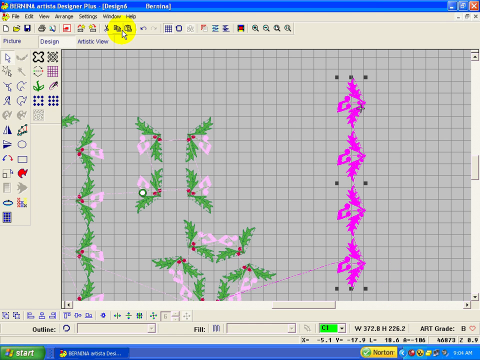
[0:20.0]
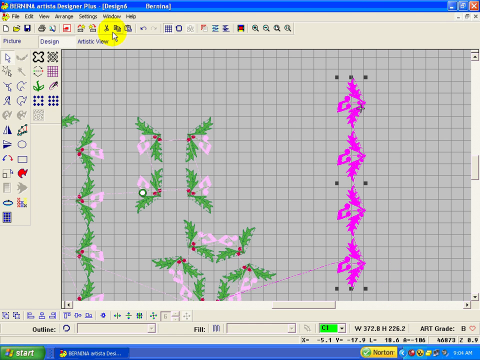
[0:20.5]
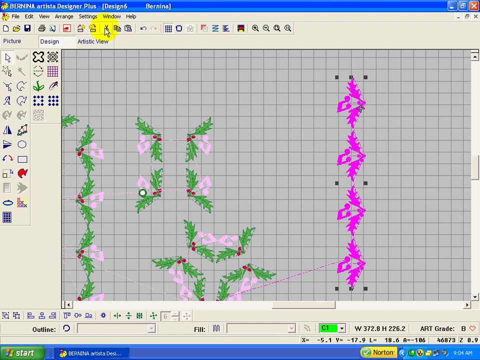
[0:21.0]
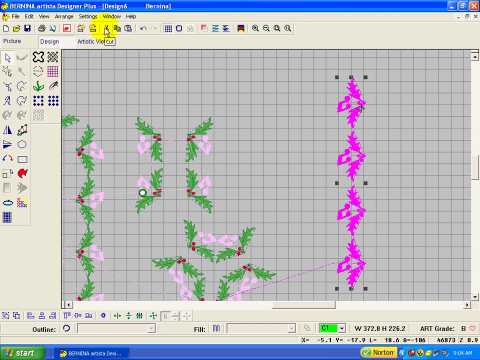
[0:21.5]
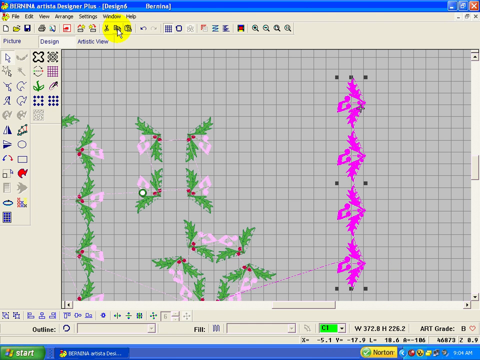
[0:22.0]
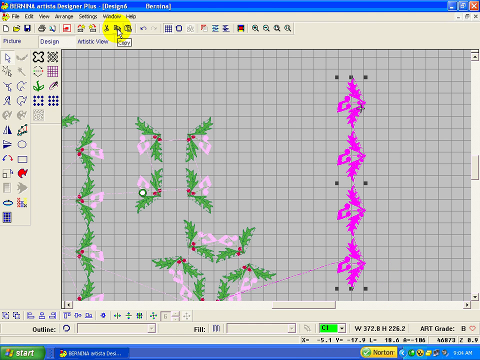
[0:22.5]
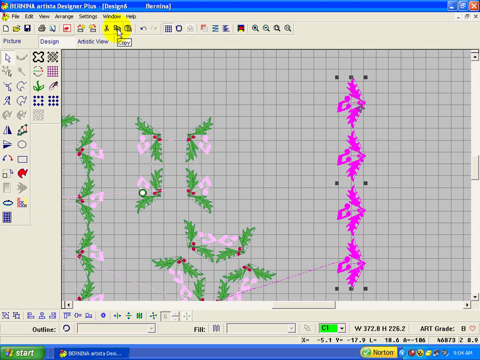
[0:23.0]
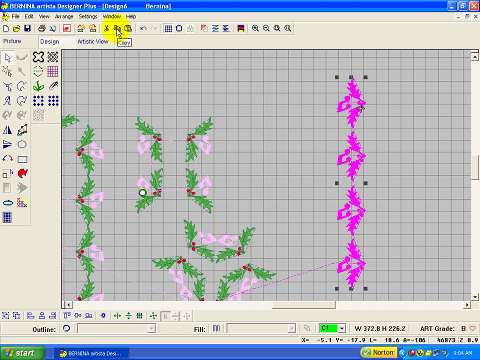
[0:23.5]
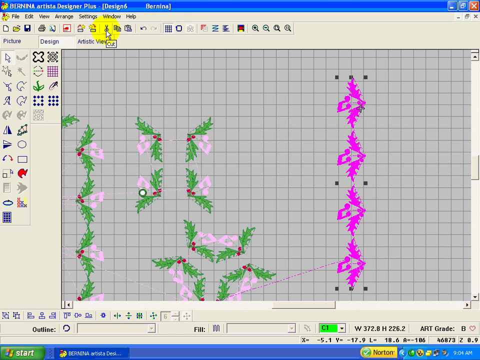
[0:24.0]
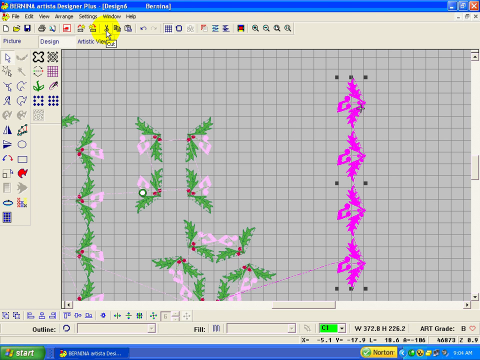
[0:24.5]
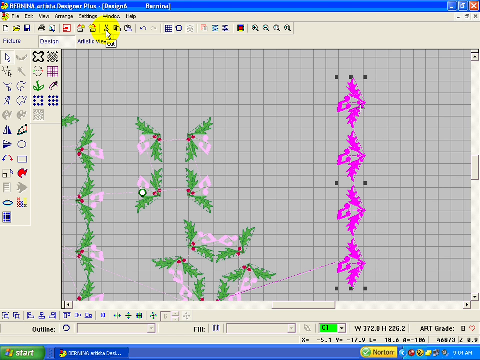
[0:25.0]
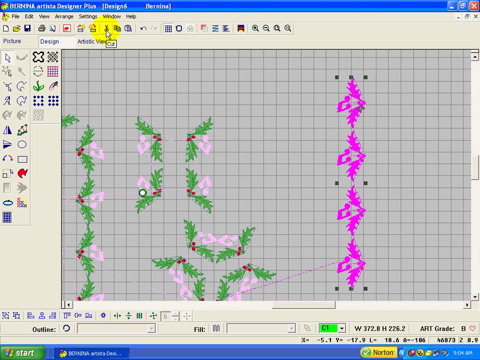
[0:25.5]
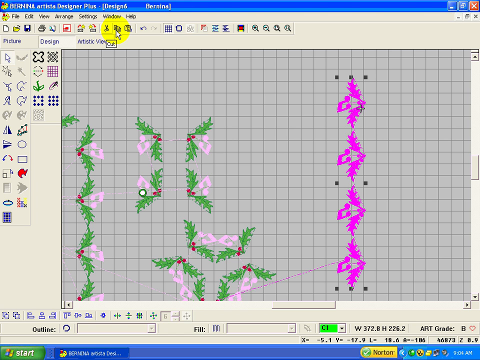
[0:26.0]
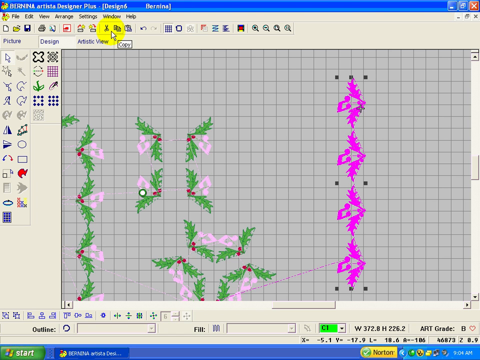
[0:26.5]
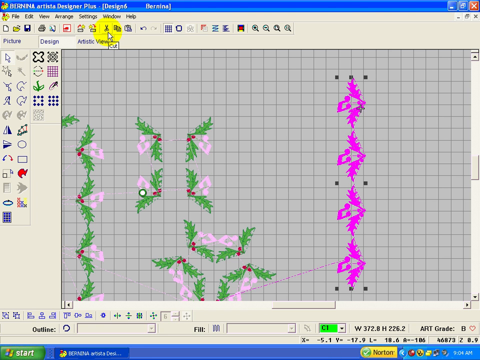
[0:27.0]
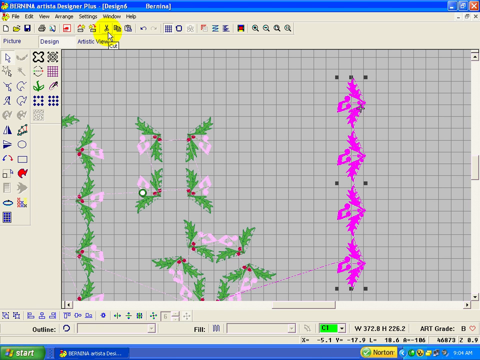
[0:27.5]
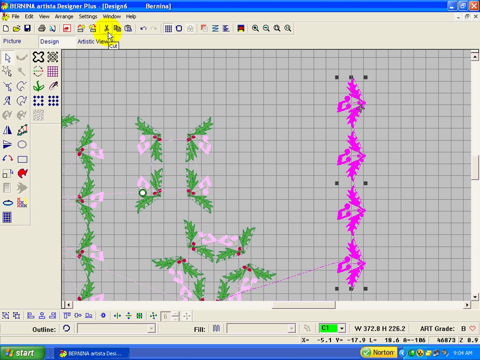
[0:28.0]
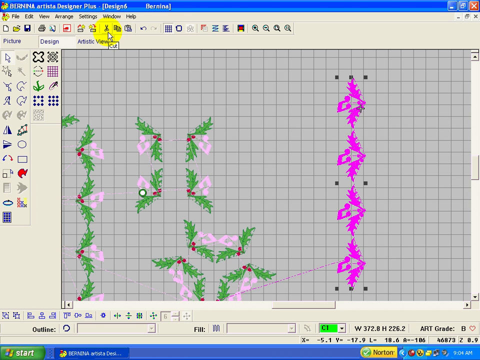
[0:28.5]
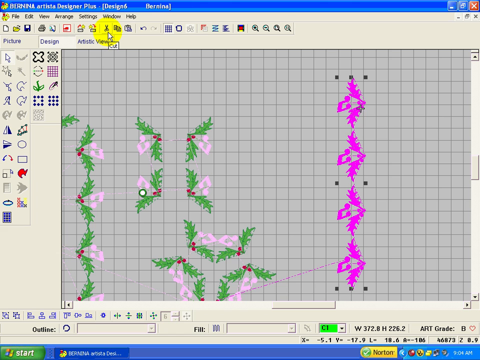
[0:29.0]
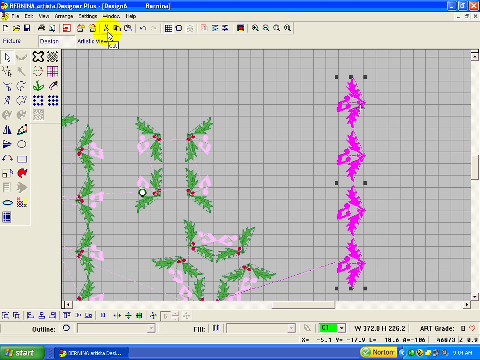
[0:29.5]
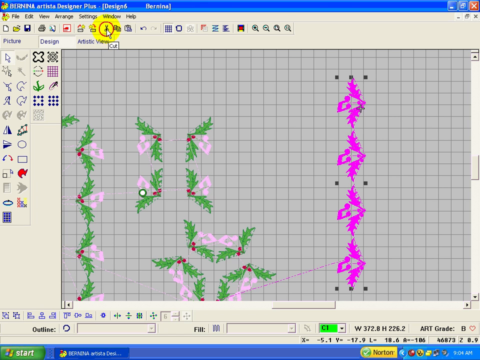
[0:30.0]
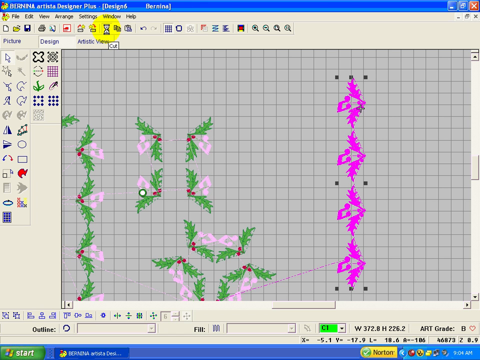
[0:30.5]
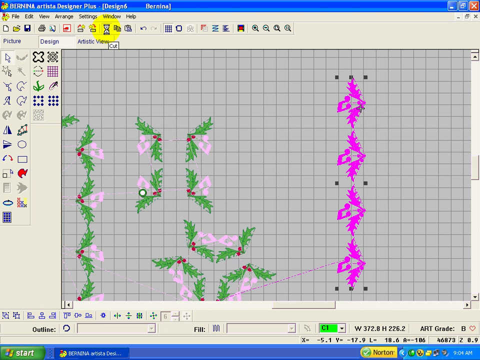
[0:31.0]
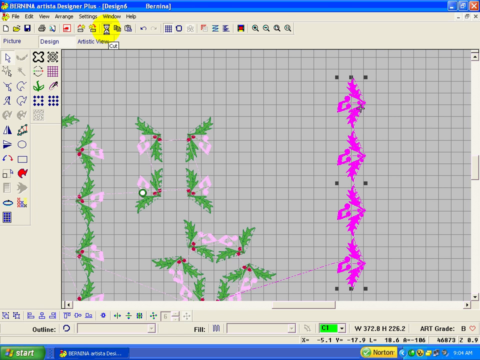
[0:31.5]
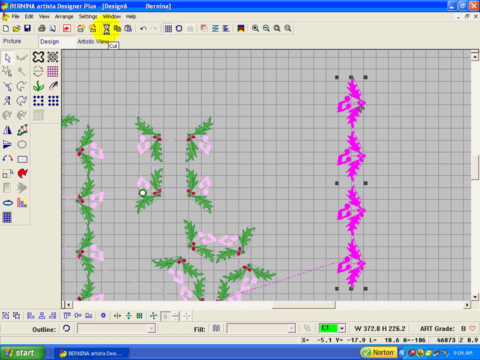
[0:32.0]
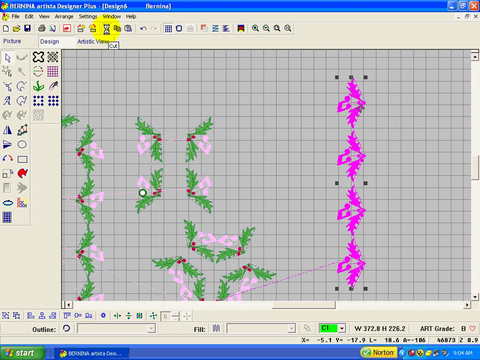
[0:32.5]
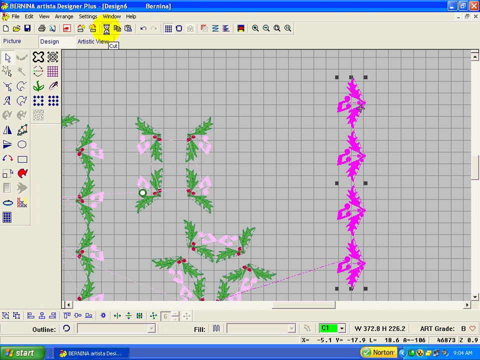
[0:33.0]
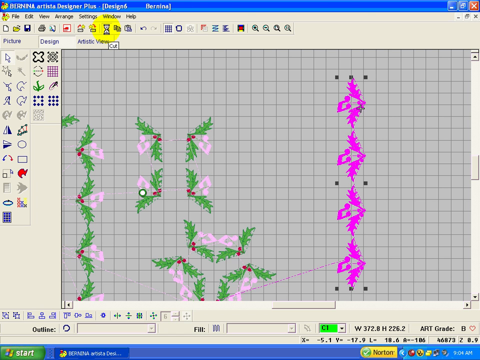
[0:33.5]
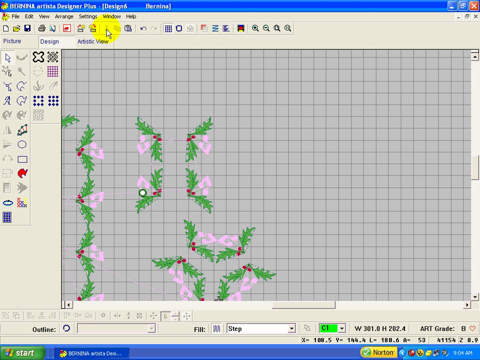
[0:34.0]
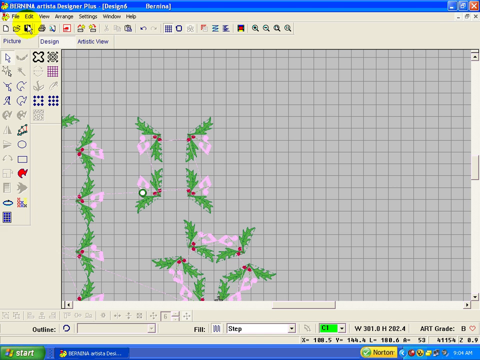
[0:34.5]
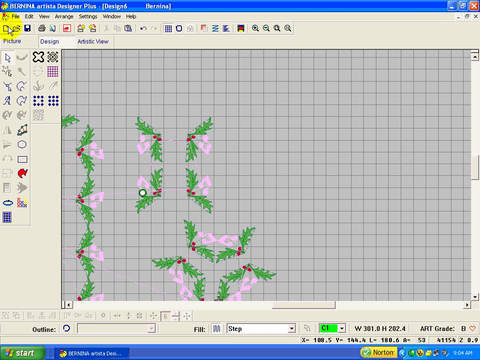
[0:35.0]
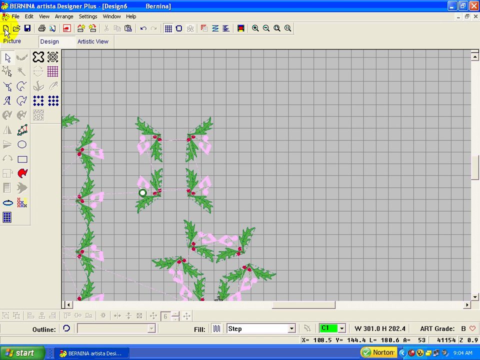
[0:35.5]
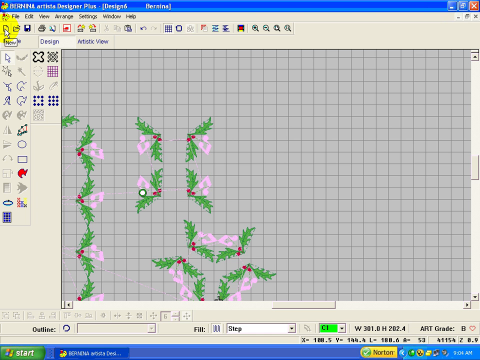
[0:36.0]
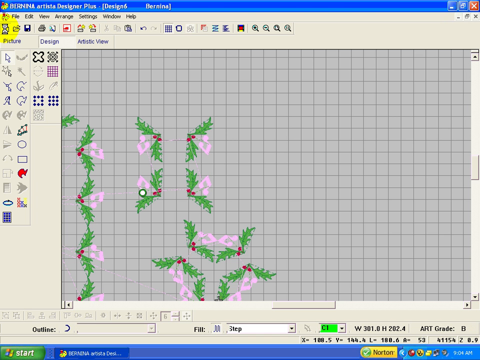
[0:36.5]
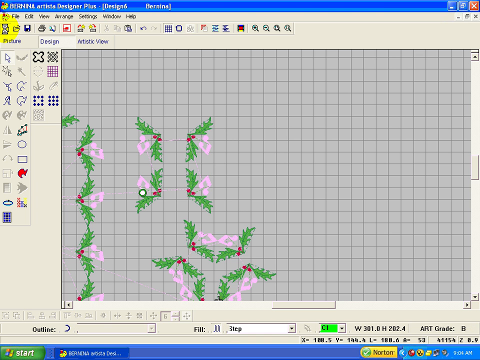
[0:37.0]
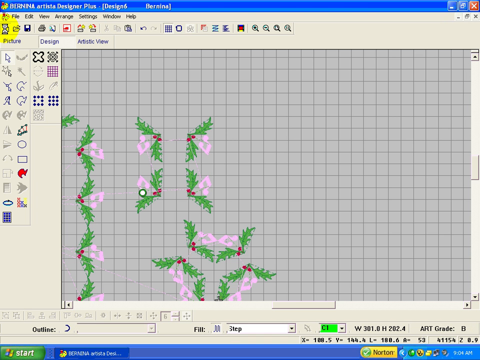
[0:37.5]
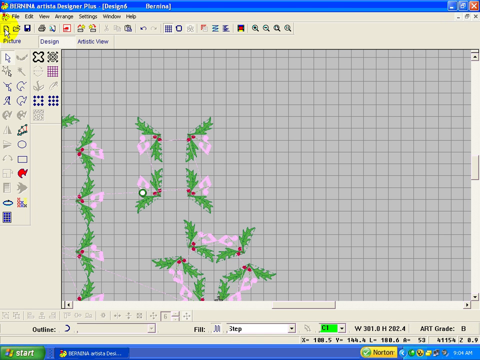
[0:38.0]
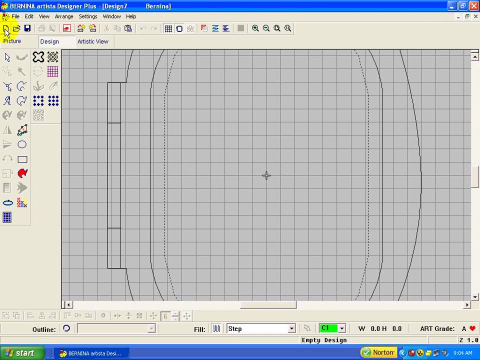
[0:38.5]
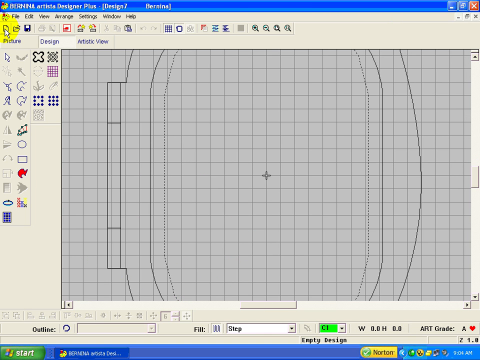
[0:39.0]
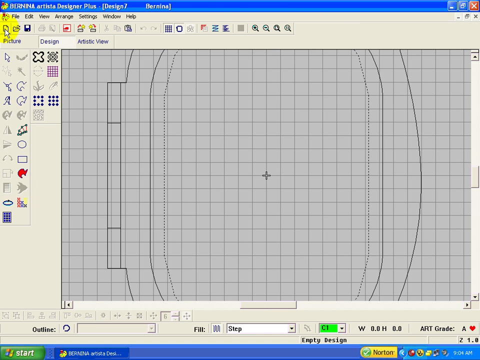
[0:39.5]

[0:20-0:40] Once the four ornate leaf arrangements are selected, they turn magenta. The cursor, still marked by the yellow circle, moves to the copy and cut tools and goes back and forth between the tools at the very top. It eventually clicks cut. The program seems to stutter for a moment, and an hourglass icon appears while the computer loads. The selected decorations then disappear. The cursor moves to the top left and hovers over another icon, and the computer stutters for a second while the time icon shows. The view then changes to a different image on the grid: an outline.